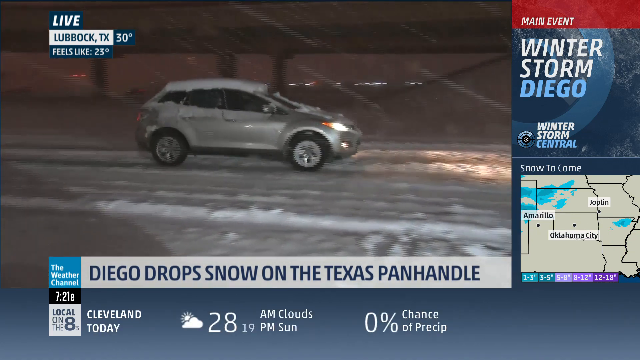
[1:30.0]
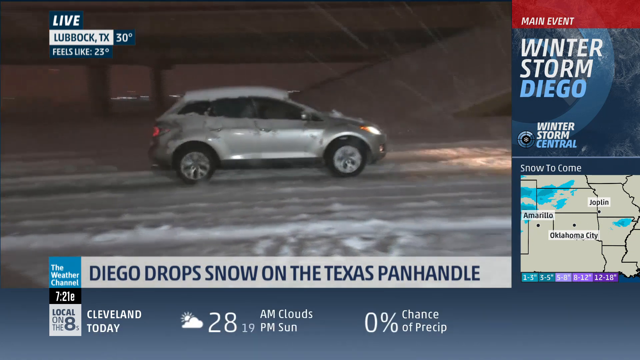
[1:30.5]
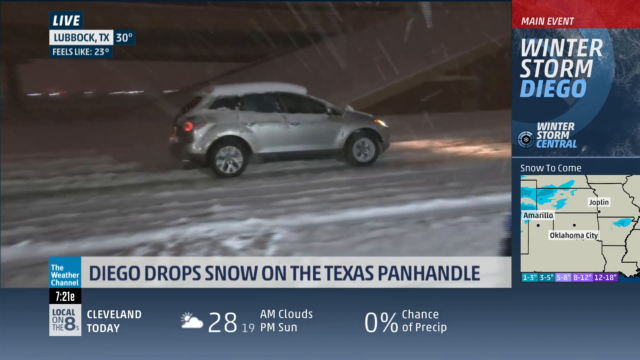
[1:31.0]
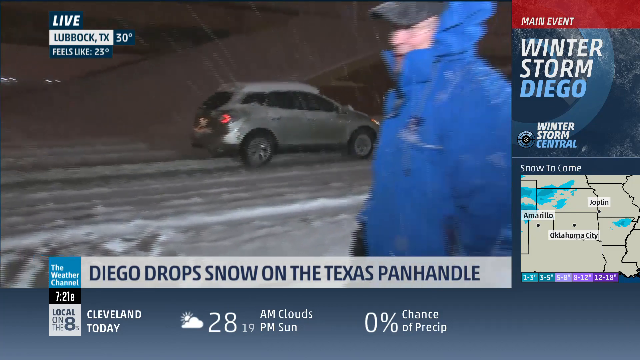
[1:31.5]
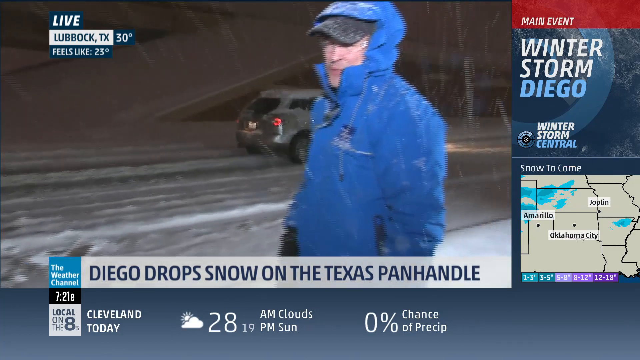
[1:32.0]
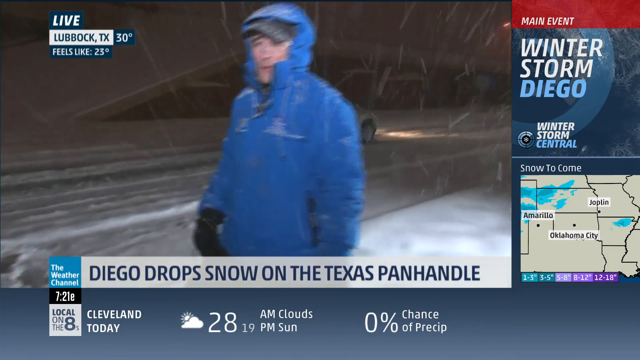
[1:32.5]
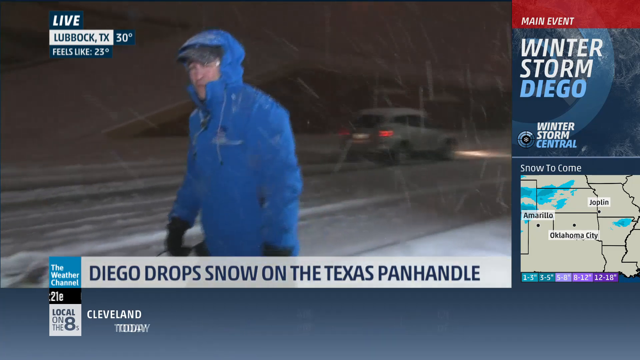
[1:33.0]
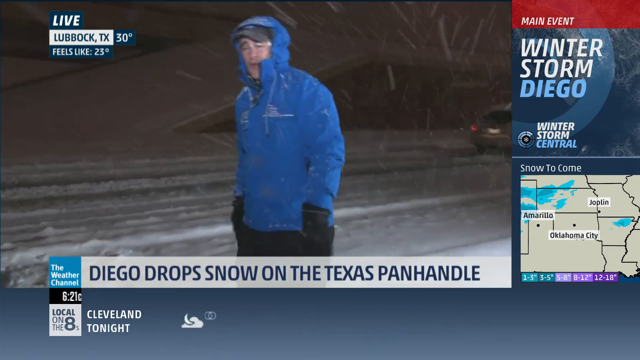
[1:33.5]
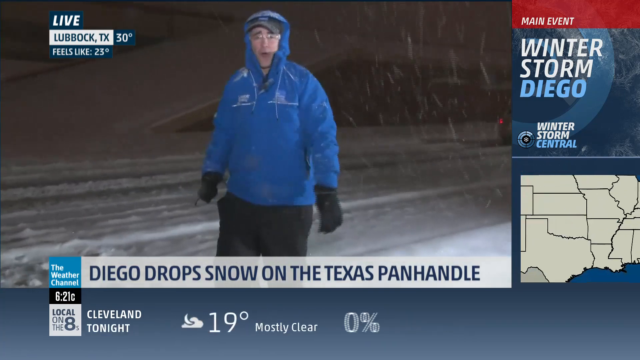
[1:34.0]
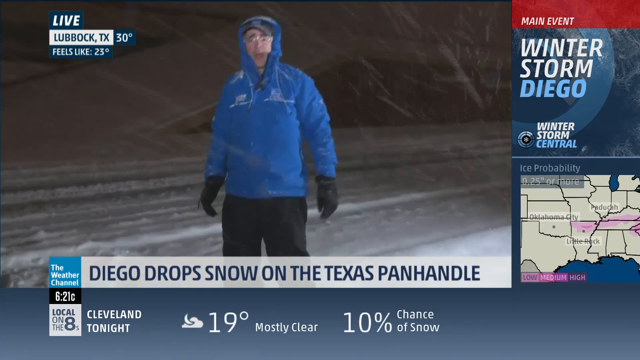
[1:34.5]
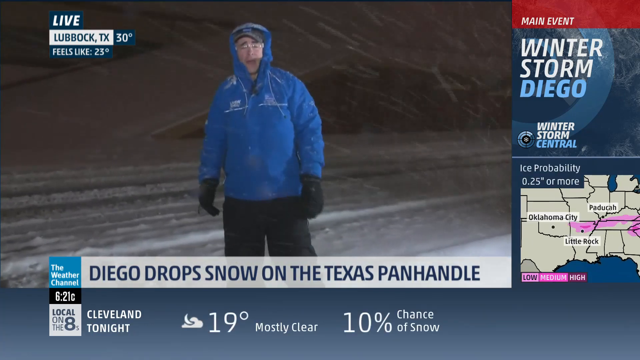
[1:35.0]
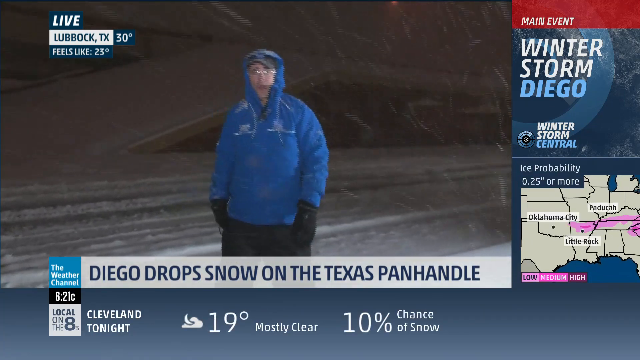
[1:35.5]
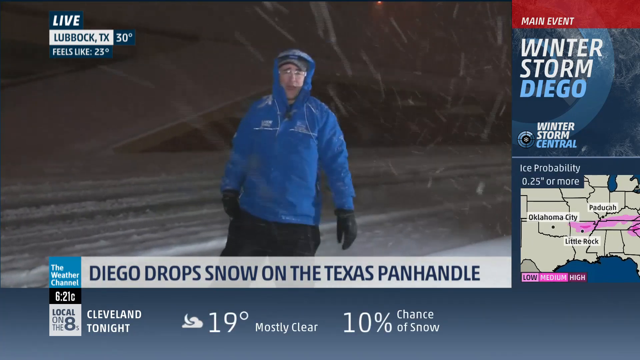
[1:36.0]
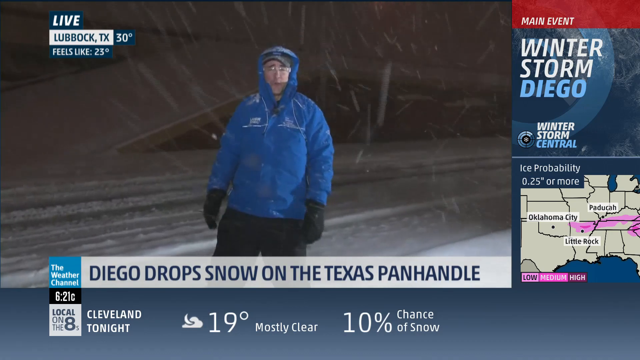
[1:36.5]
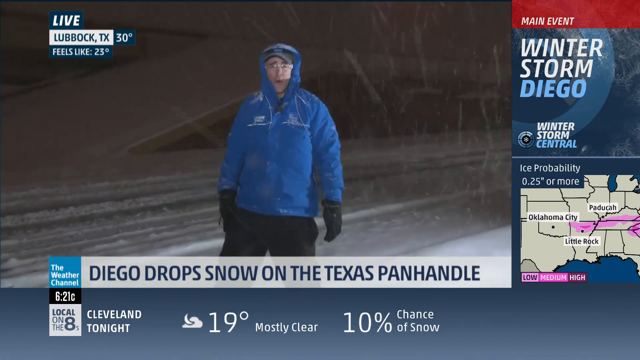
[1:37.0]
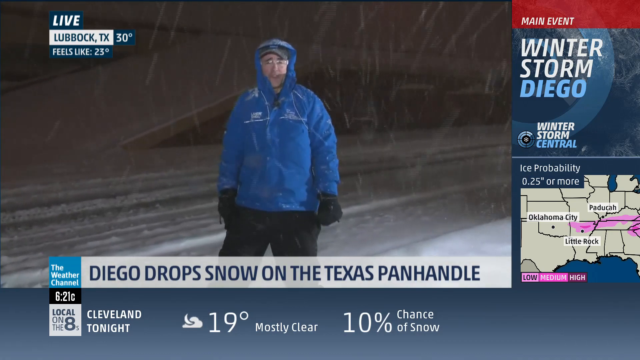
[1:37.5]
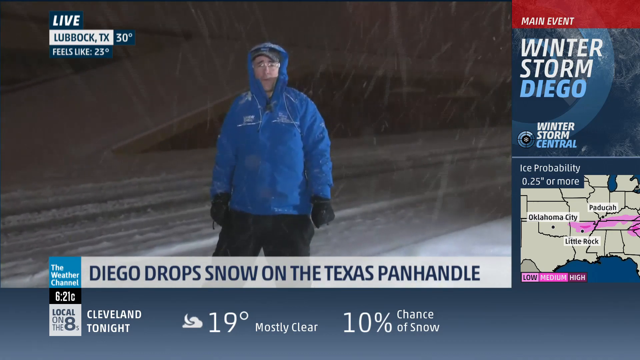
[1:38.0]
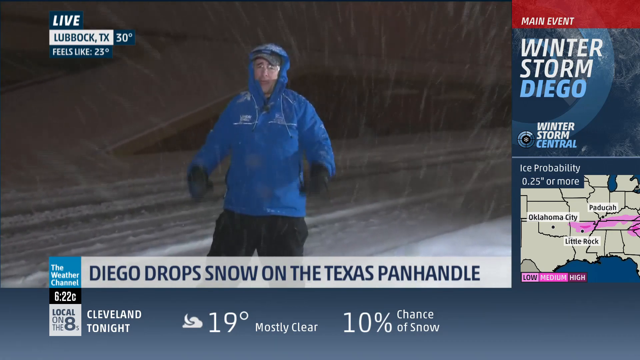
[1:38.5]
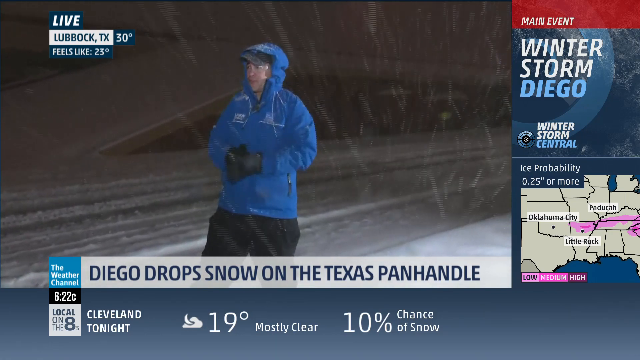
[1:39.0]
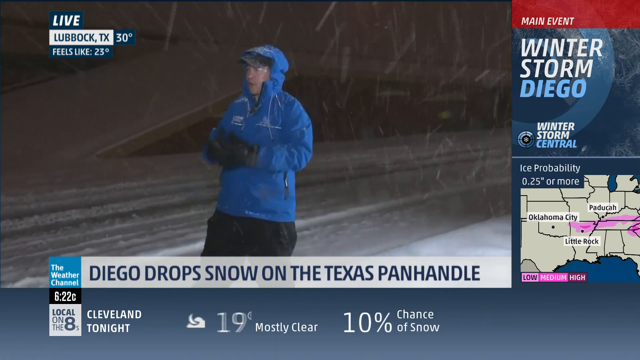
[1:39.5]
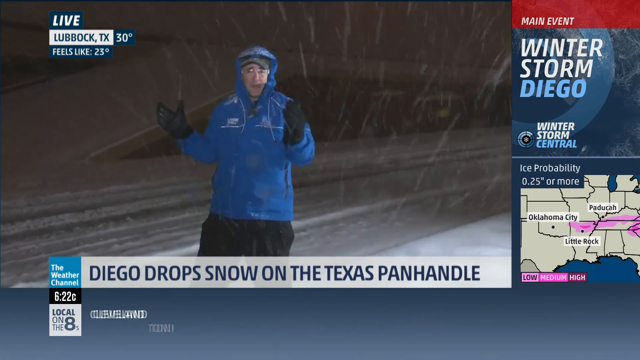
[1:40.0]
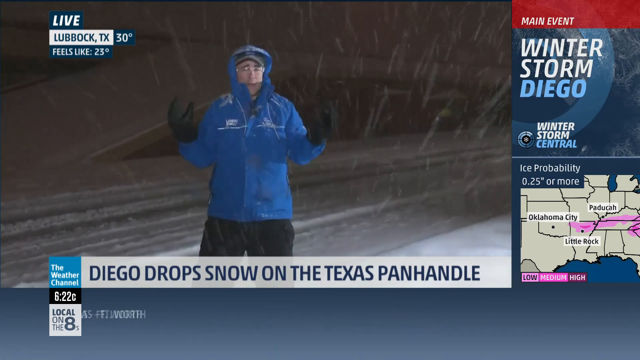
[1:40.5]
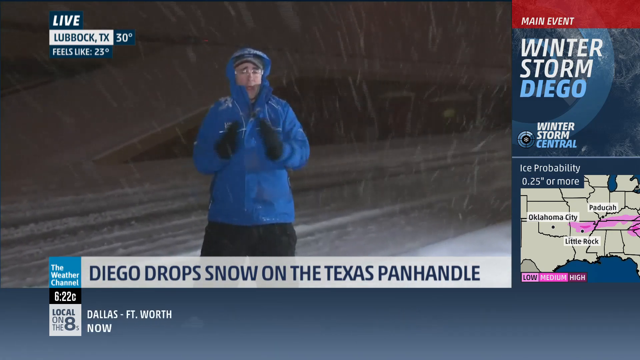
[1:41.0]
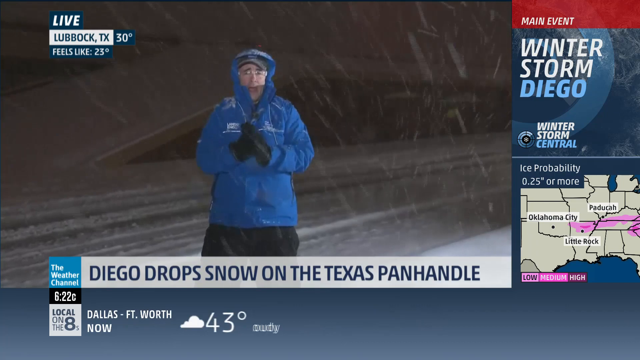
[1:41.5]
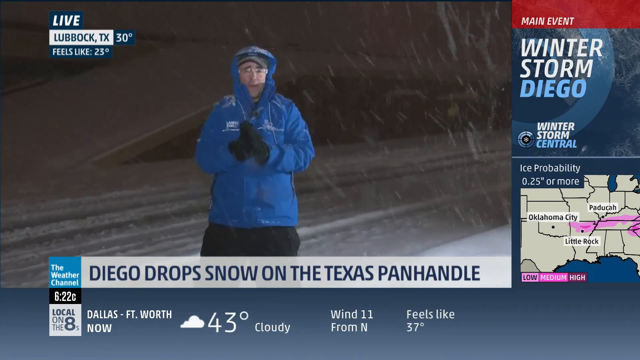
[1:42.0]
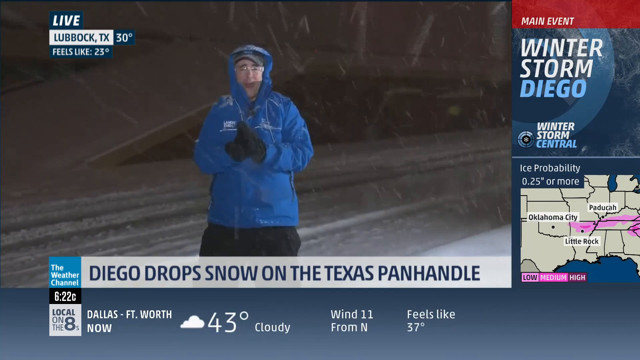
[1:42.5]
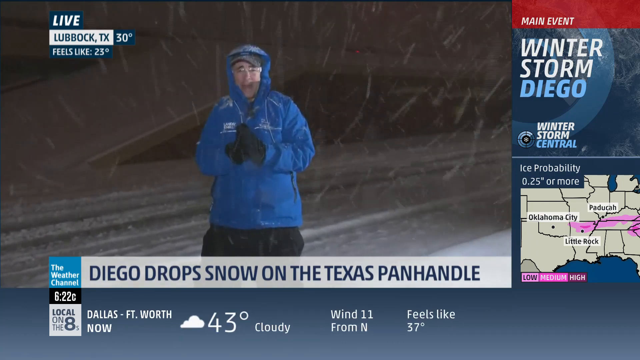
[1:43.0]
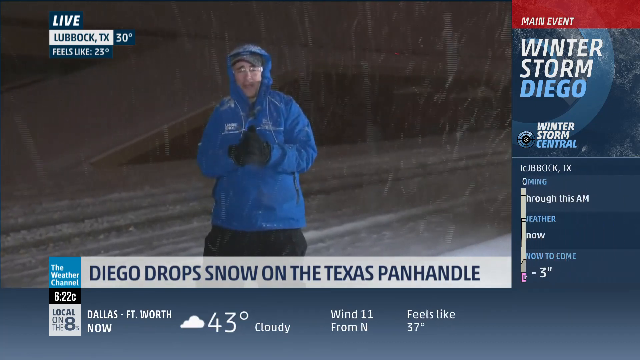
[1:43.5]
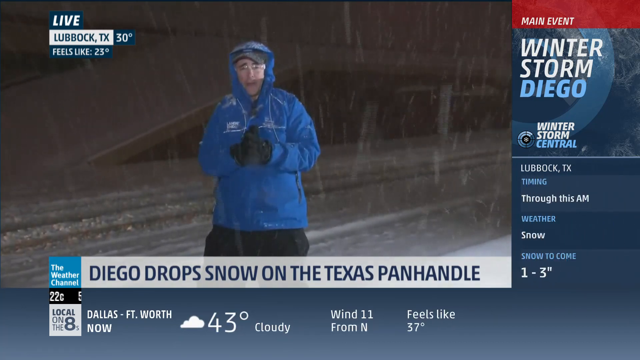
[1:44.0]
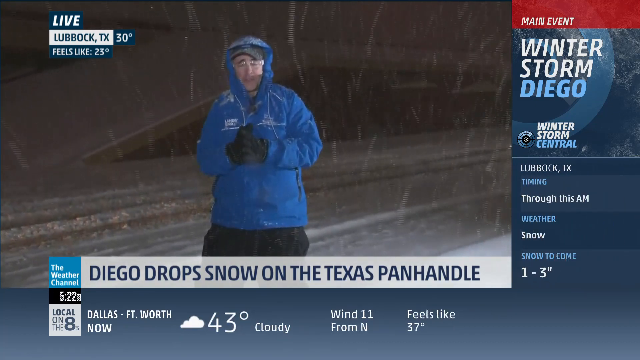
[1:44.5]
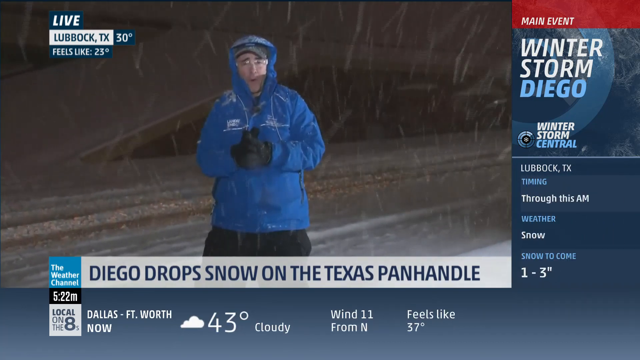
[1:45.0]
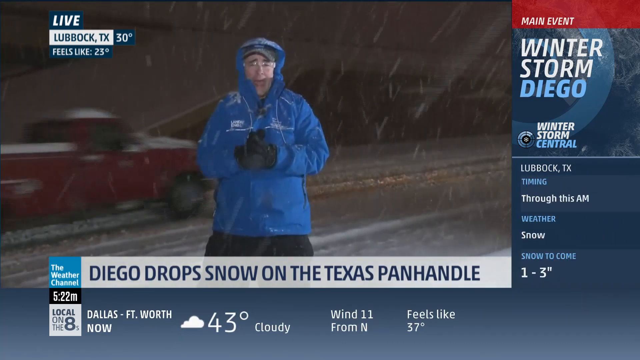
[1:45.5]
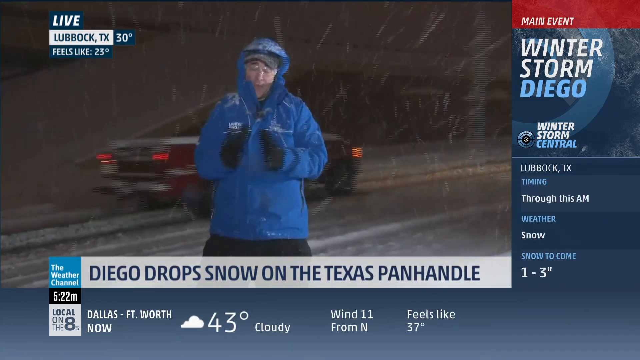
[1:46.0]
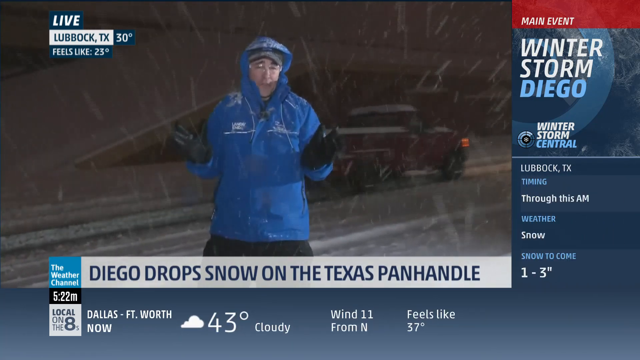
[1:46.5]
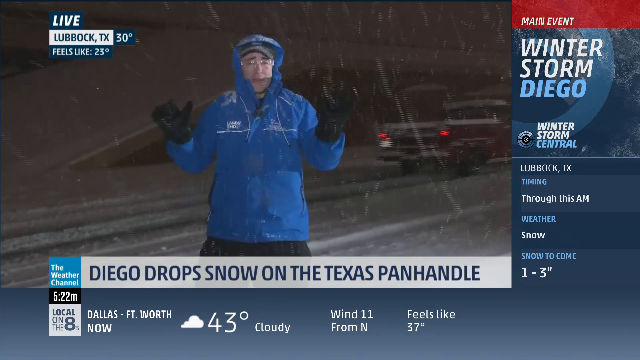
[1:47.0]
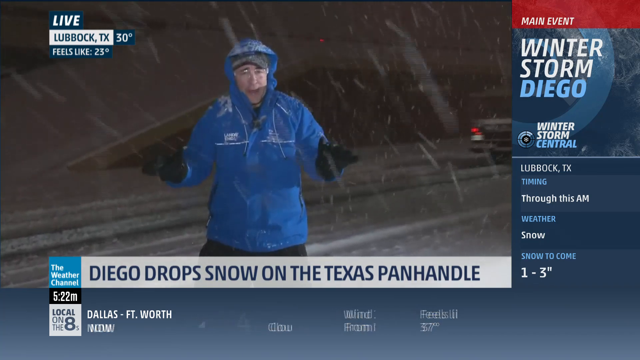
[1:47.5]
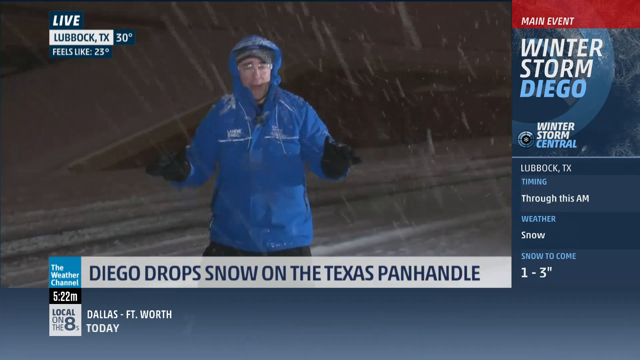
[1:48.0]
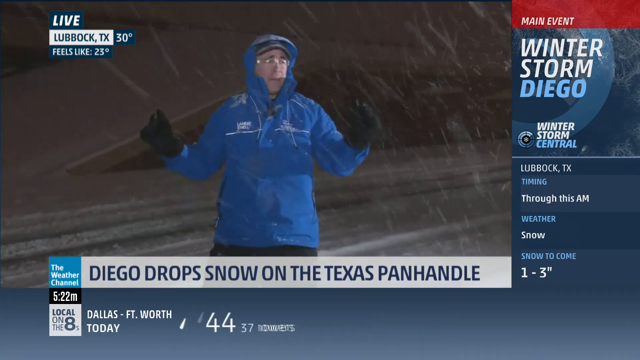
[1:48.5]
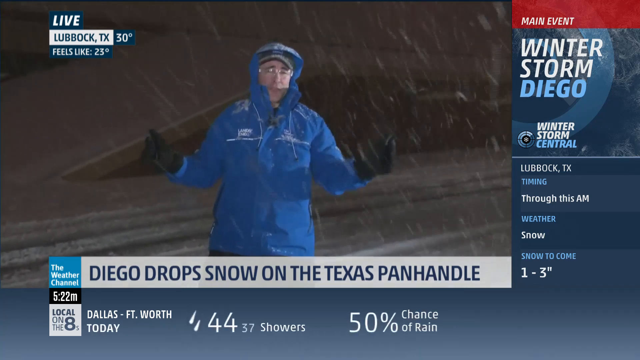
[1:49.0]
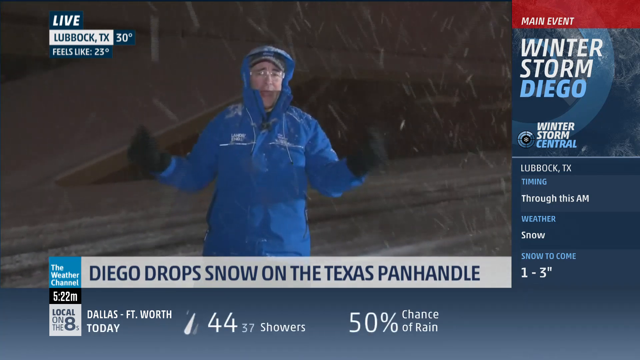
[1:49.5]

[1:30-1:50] The live broadcast from Lubbock, TX shows 30 degrees, feeling like 23 degrees, on the Weather Channel, America's number one weather network, trusted, reliable and accurate, with the story of Diego dropping snow on the Texas Panhandle. The newsreader walks around with the cameraman, showing what is happening. Cars pass through the area; the roads and the cars are covered in snow. A grey SUV covered in snow passes on the road. The newsreader is a white man wearing a blue jacket, black gloves, black trousers, glasses and a black cap. The area is dark and not busy.